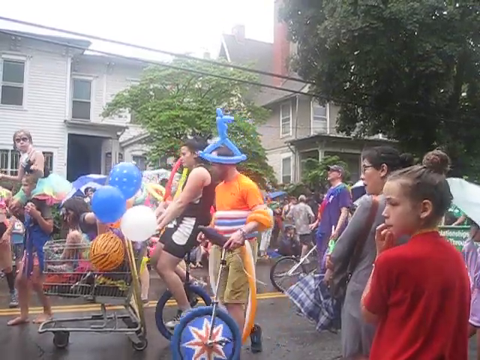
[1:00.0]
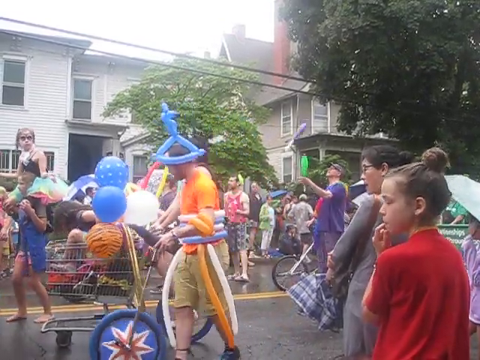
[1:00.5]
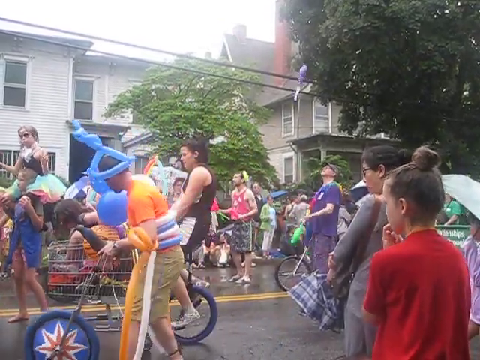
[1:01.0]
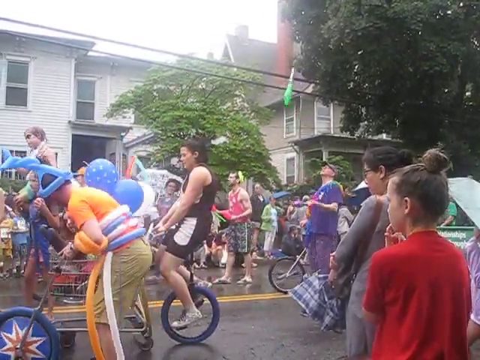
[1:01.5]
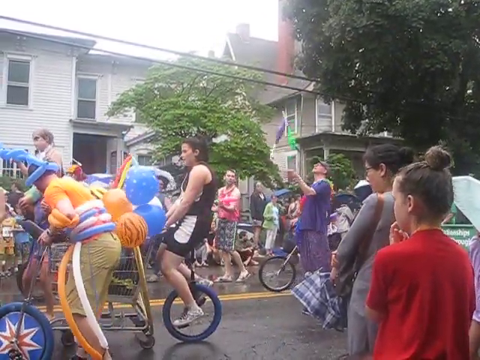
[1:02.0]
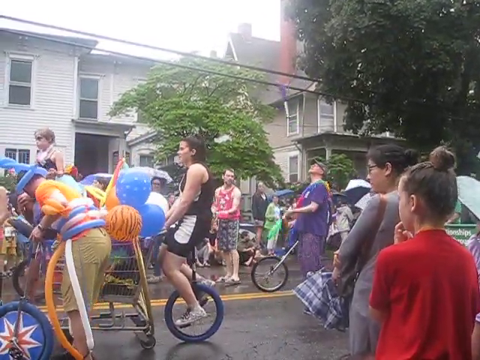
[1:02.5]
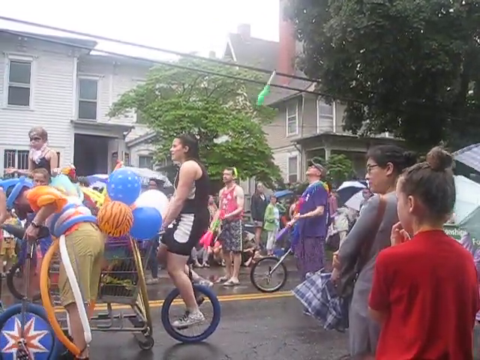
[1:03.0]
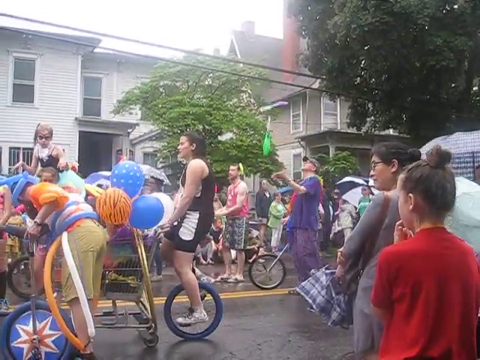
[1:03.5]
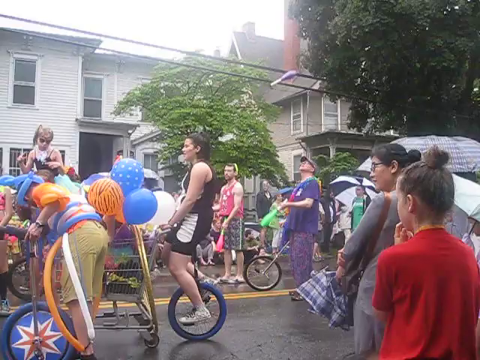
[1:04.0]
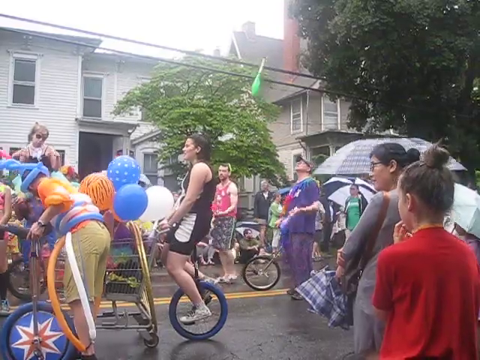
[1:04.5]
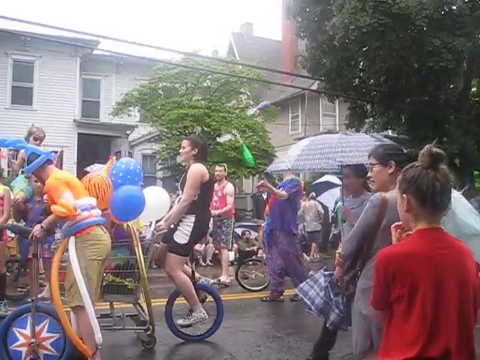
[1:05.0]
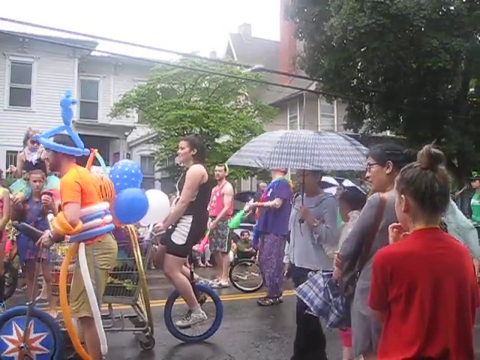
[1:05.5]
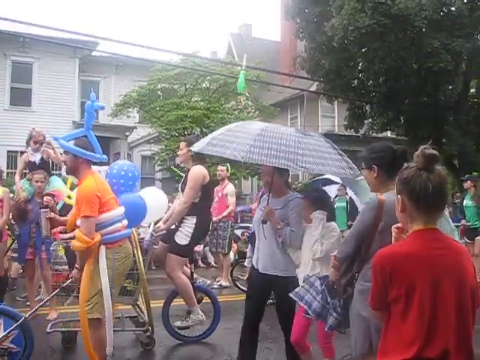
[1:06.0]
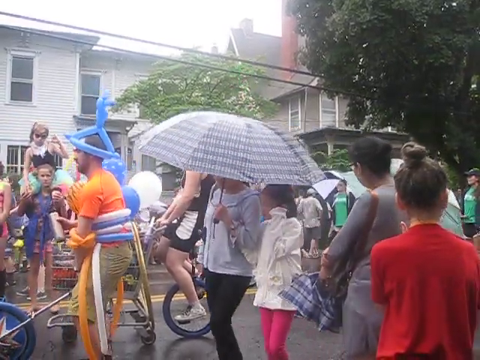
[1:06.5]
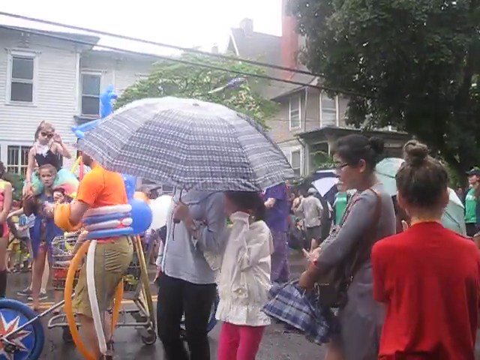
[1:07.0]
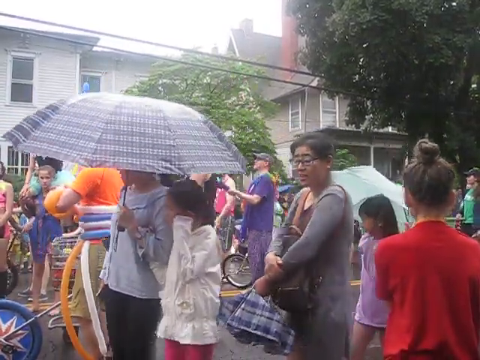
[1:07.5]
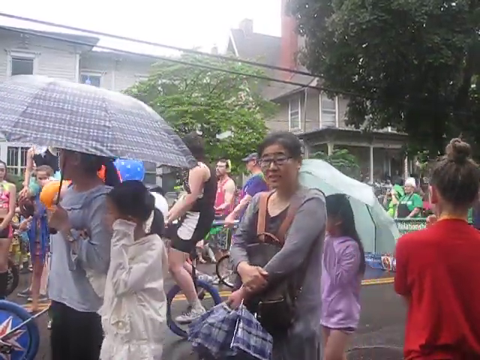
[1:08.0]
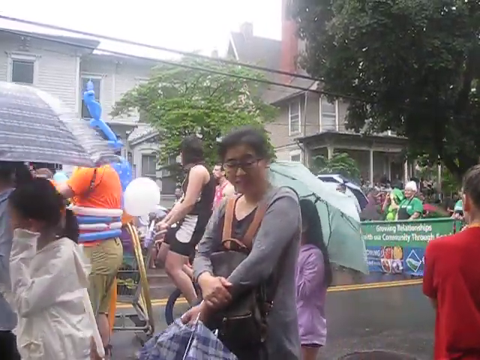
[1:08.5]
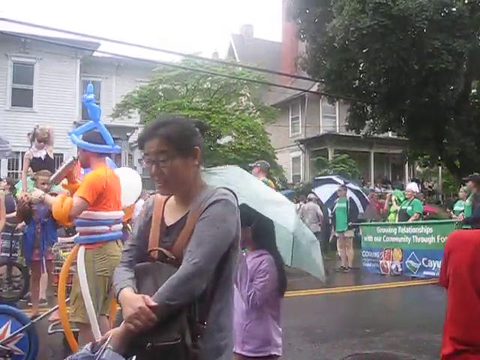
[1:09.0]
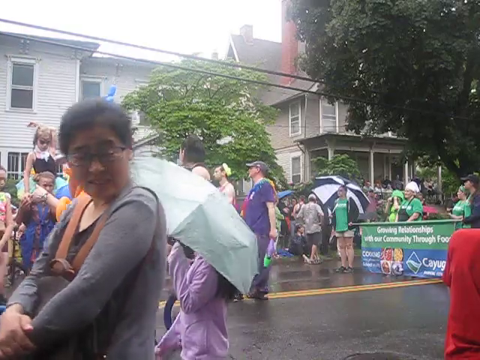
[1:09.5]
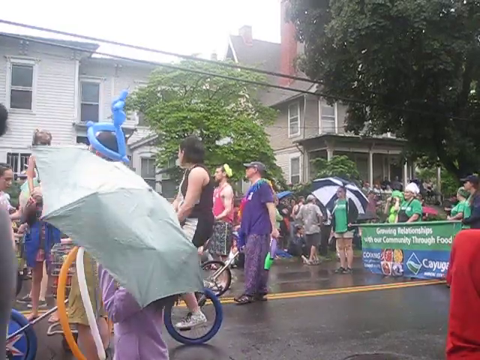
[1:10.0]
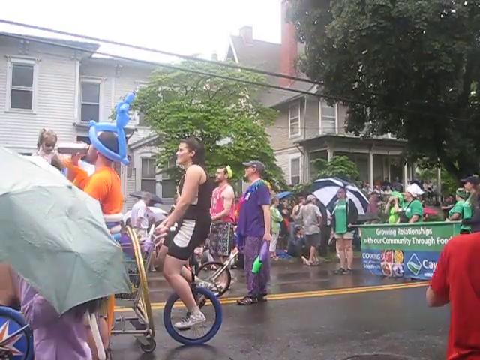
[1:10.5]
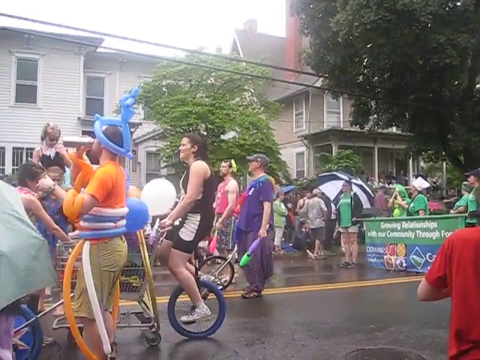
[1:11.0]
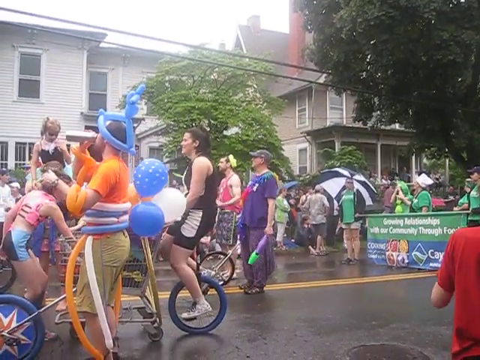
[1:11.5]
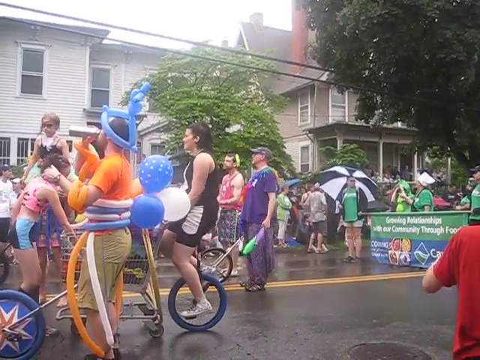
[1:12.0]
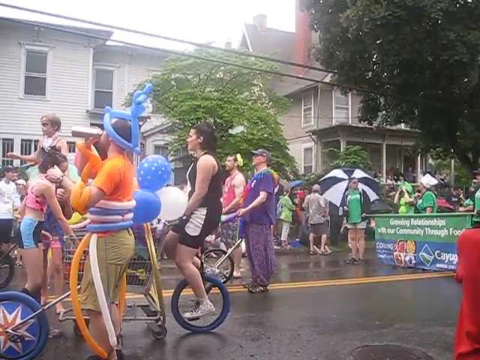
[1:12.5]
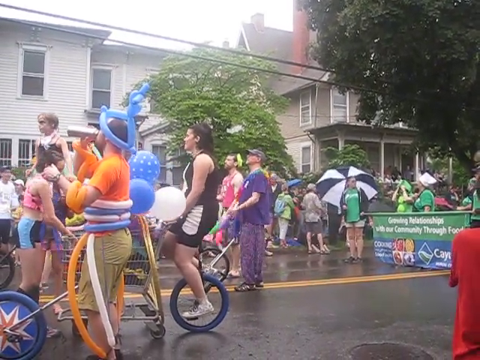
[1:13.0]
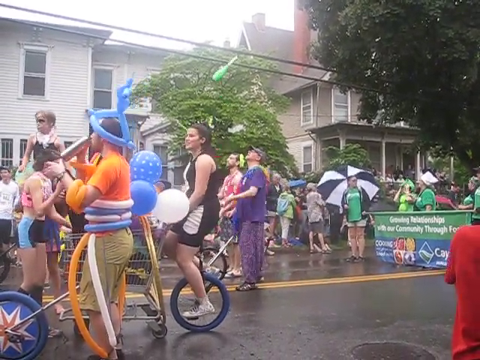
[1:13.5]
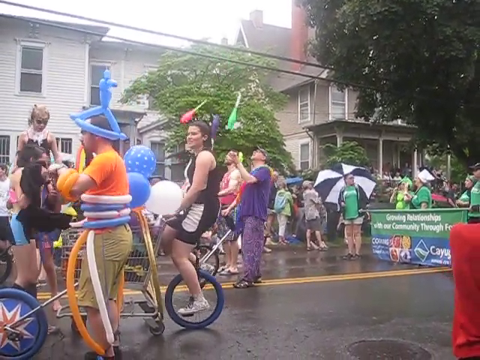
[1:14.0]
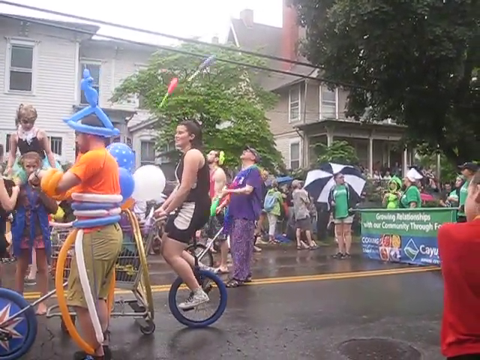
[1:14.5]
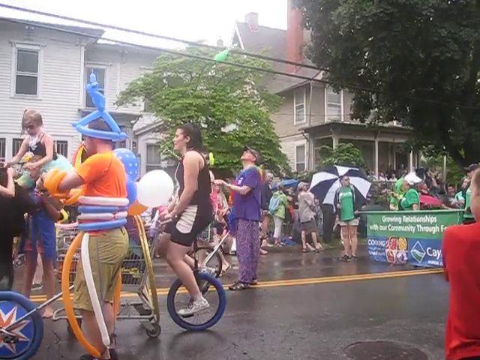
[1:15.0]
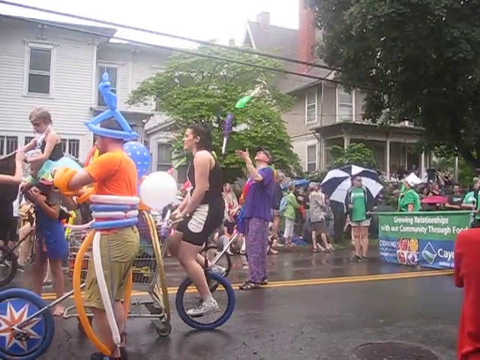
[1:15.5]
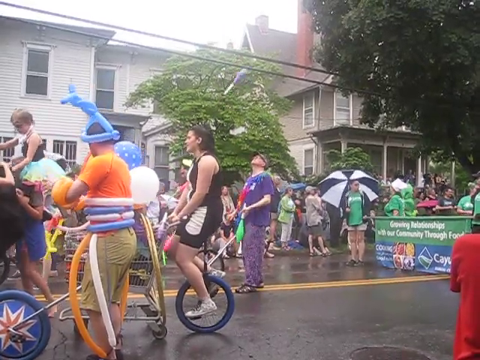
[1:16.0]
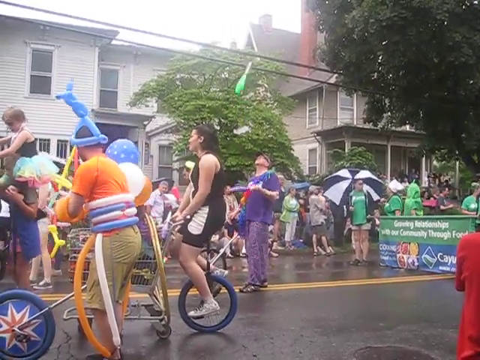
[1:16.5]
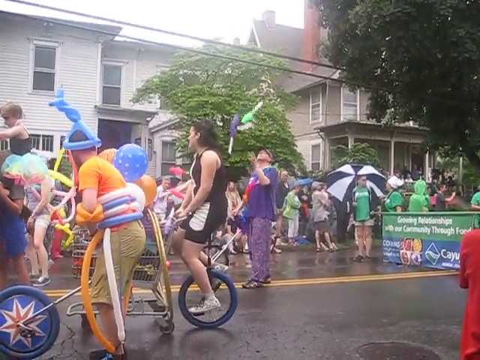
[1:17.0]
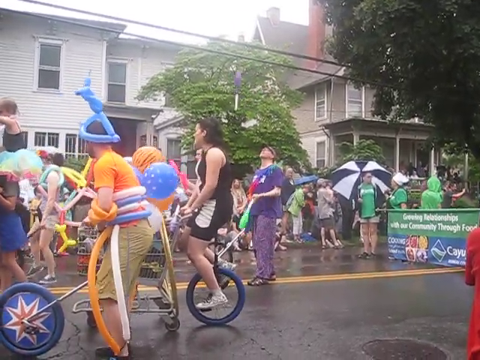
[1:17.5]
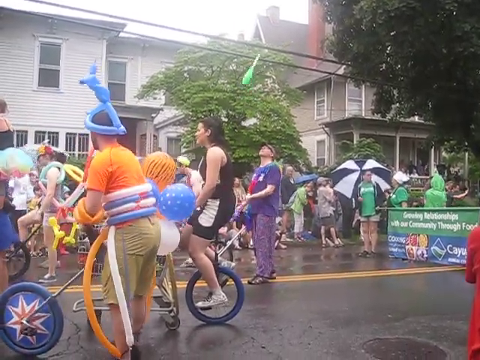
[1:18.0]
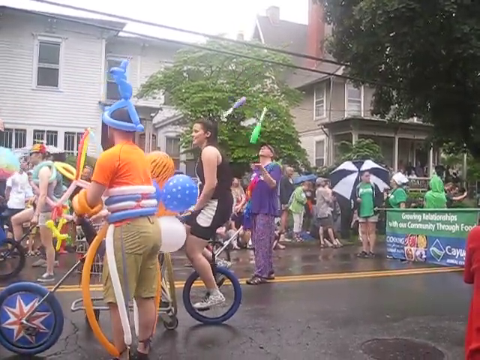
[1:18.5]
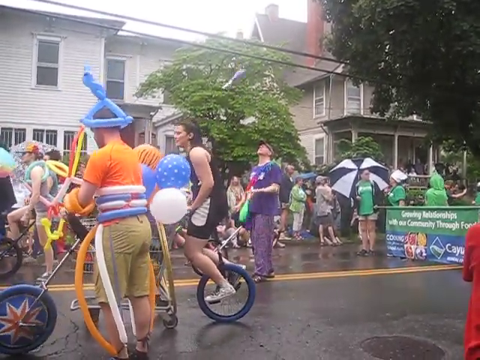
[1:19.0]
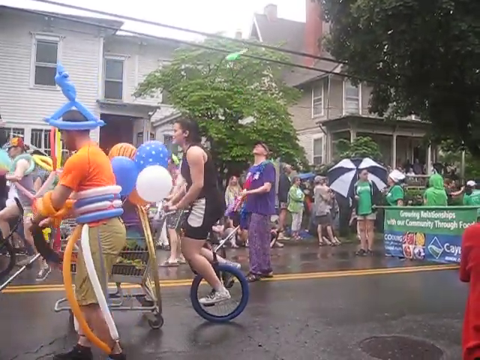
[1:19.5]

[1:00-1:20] Outside on a street, people line the pavement, with houses and two big bushy trees behind. Down the centre of the road comes a procession of the local circus school. A girl on a unicycle pushes a small shopping trolley with a child carrying balloons inside it. A man wears a hat made of moulded balloons, has them around his waist too, and holds a unicycle in his left hand. There is not much room in the procession, so the performers have a little difficulty showing their tricks. A man holds a unicycle in one hand and uses his left hand to juggle two batons. Some passers-by with umbrellas quickly pass by the camera.